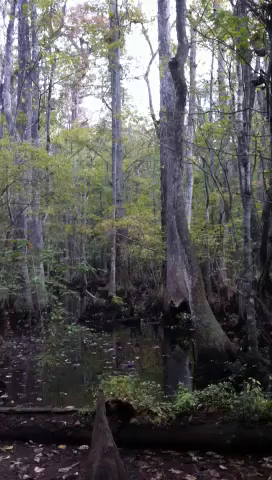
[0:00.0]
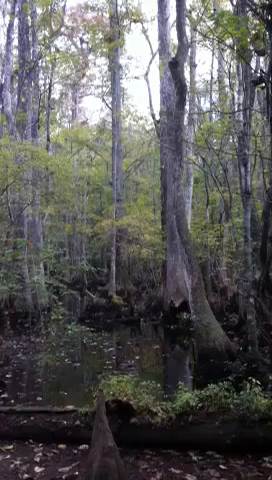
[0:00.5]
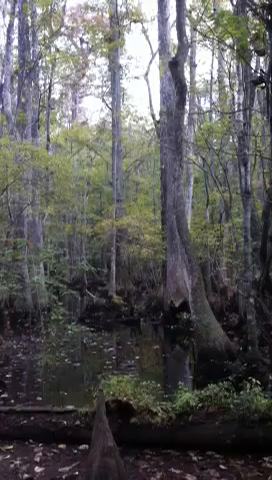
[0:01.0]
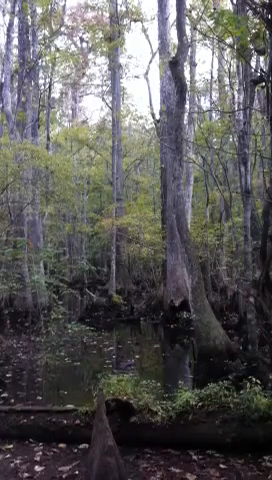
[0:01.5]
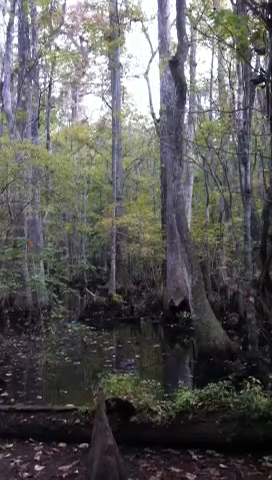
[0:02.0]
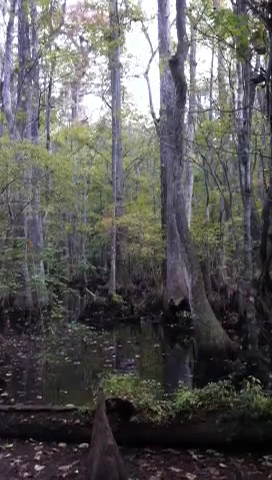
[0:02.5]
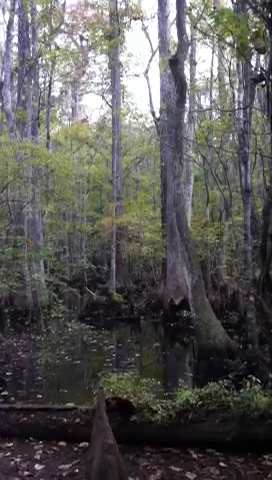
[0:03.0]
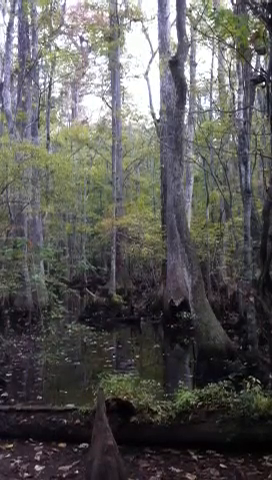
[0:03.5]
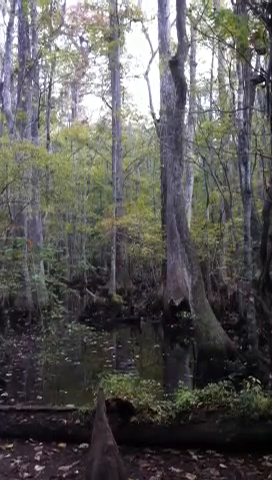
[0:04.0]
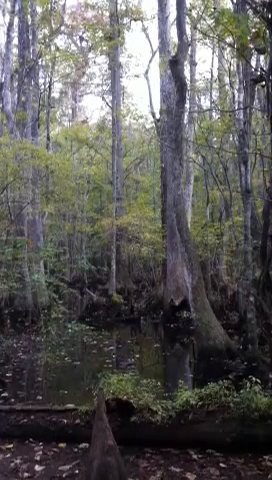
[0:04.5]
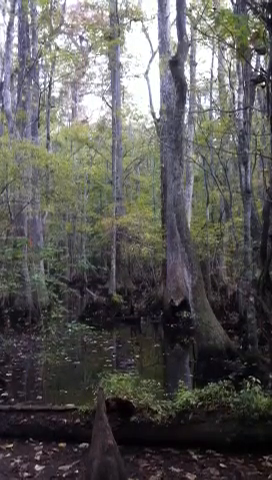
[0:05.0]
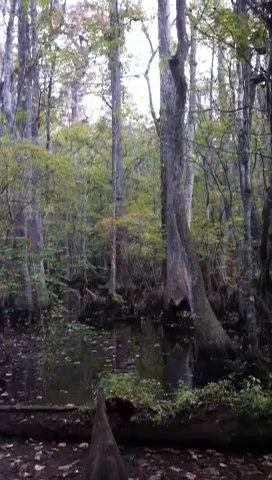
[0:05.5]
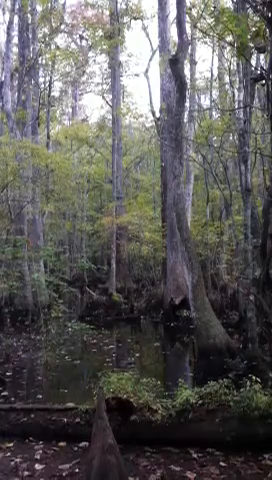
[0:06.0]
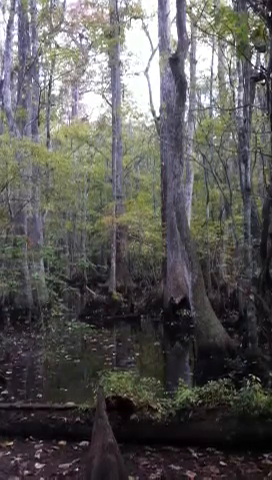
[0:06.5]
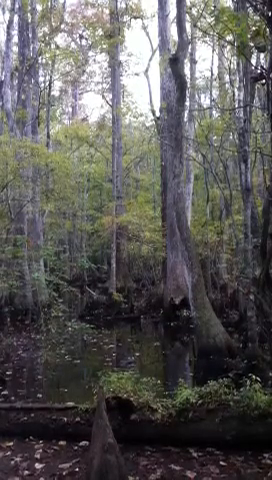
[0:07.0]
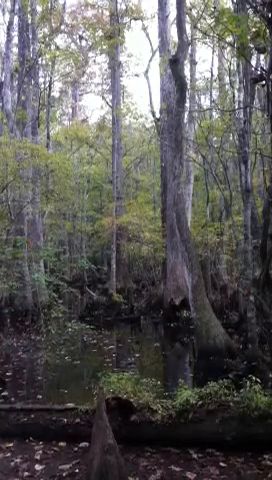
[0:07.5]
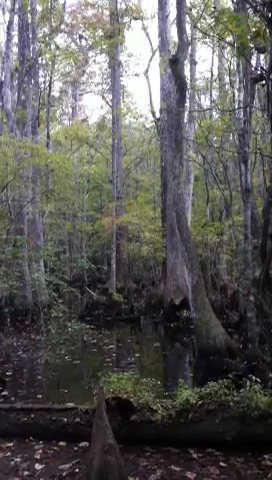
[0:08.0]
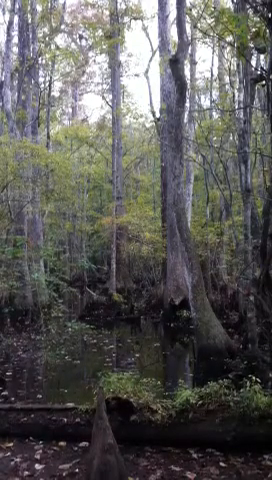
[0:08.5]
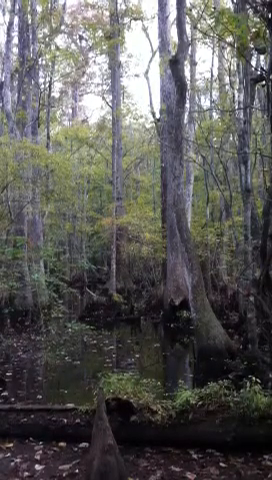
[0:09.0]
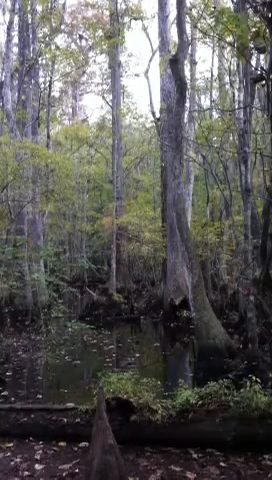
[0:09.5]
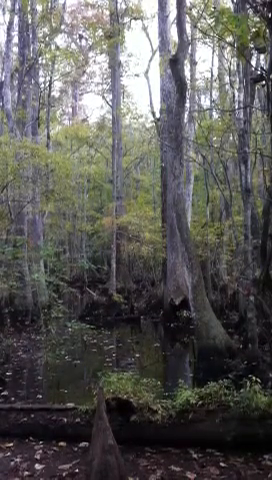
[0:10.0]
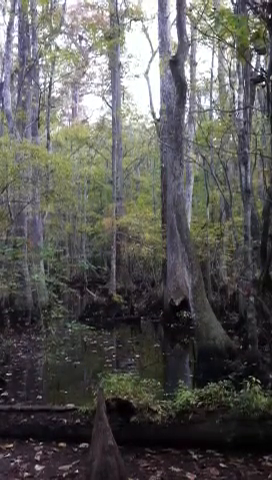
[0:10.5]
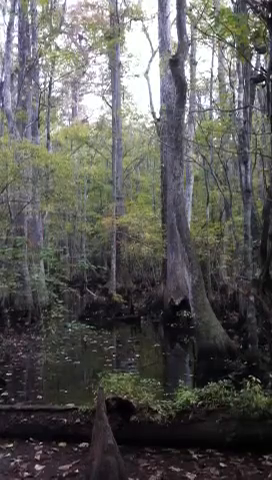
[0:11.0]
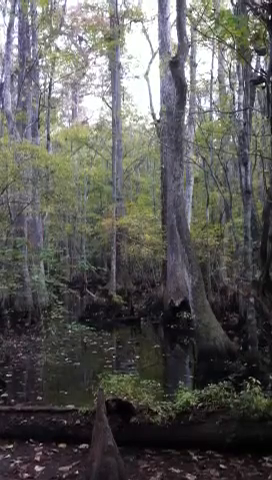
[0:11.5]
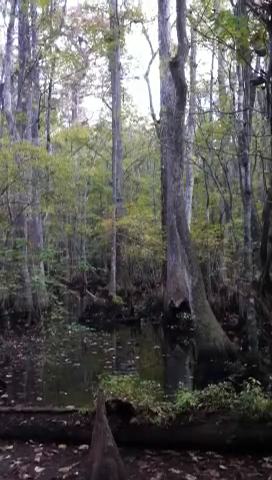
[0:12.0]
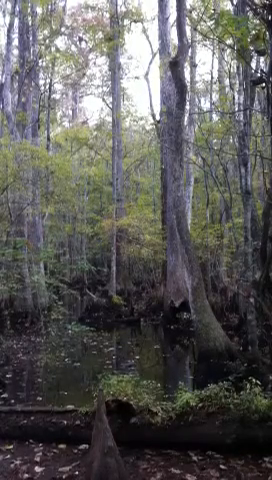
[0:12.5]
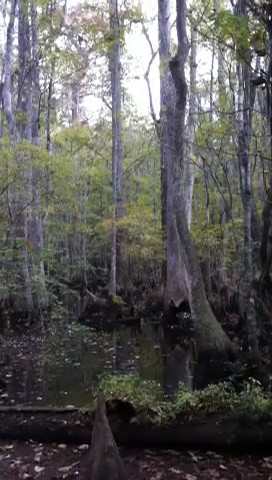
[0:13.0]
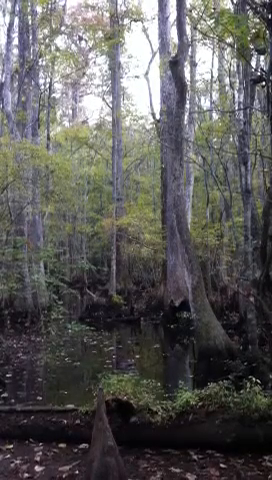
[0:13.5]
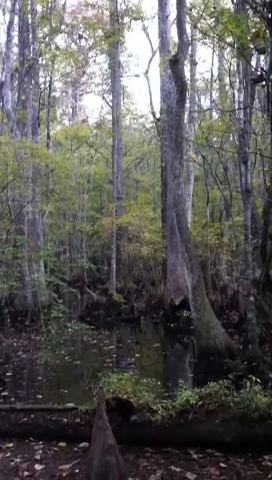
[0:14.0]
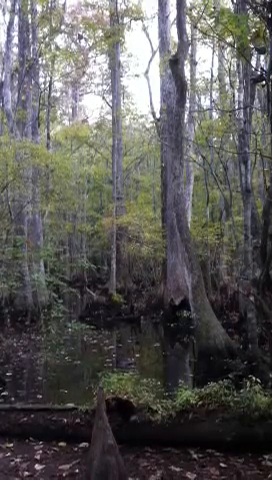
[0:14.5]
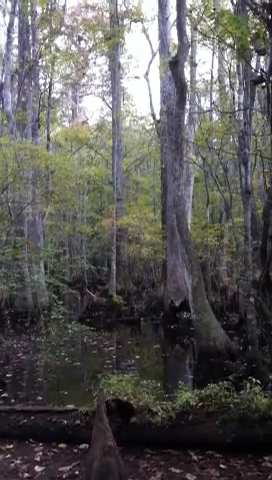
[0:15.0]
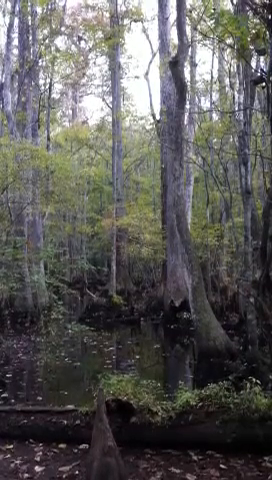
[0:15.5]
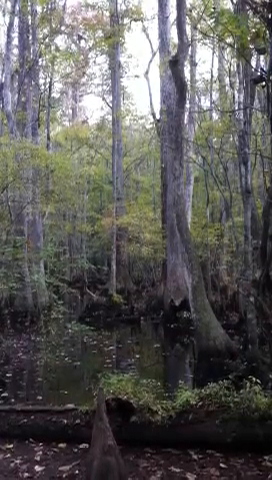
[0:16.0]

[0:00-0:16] A large wilderness scene is filled with many very tall trees. Almost nothing happens; it could nearly be a still image, though the camera bobs slightly up and down throughout the video. There is water in front of the camera, with nothing in it causing any motion at all. Some leaves in the water are kind of stagnant. Very large trees surround the water; they have leaves on them, but even those do not move. The tree trunks are pale gray. The sky is visible and is not clear but basically cloudy.